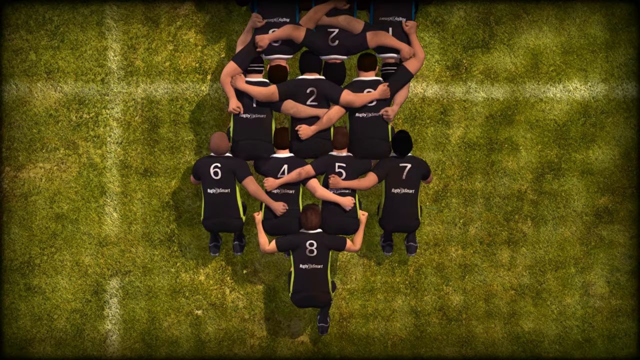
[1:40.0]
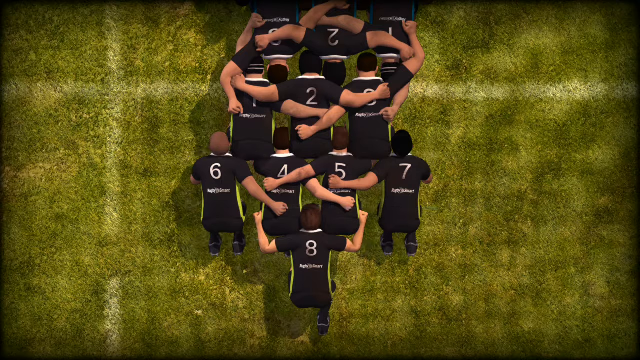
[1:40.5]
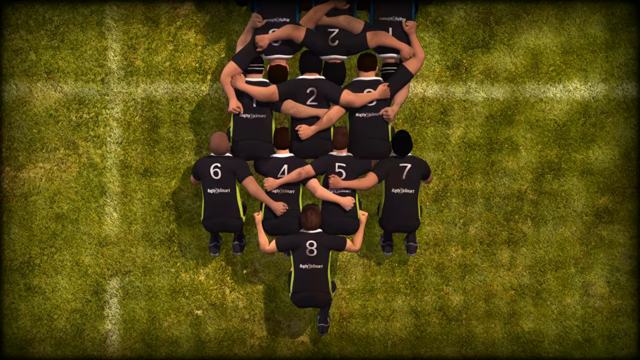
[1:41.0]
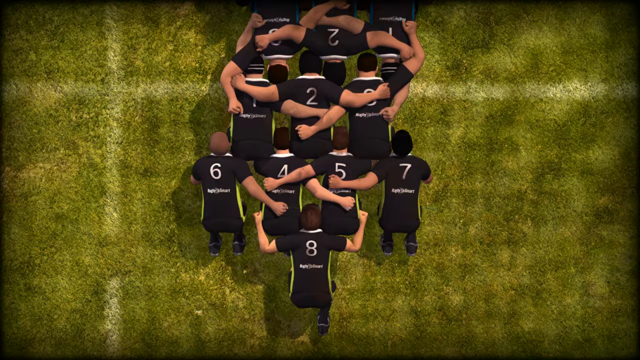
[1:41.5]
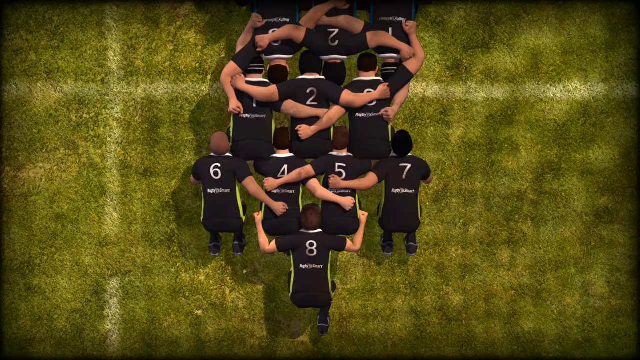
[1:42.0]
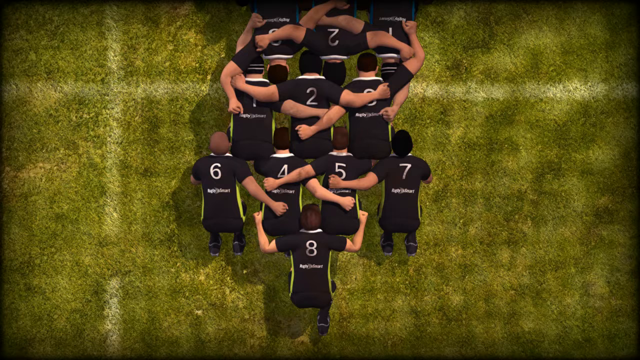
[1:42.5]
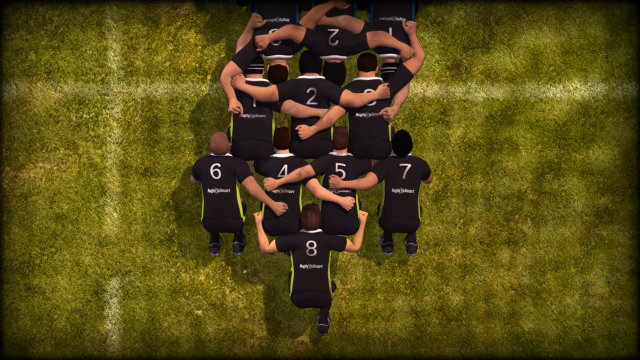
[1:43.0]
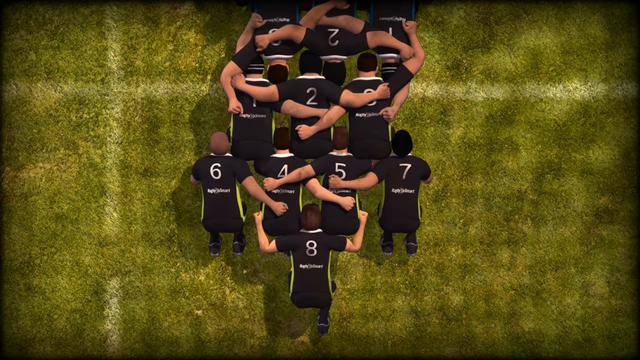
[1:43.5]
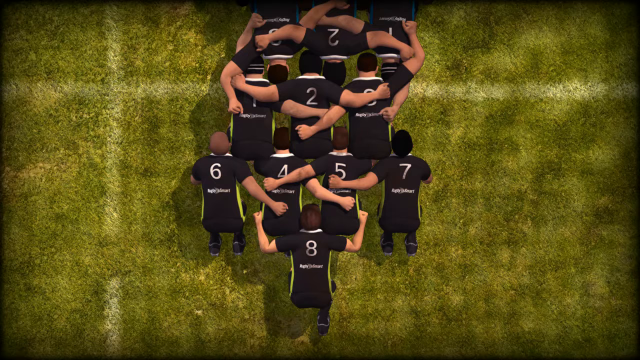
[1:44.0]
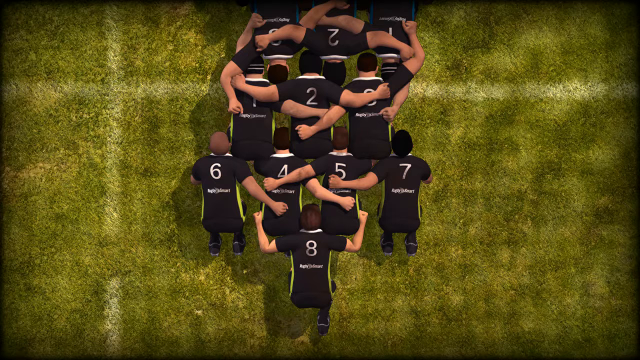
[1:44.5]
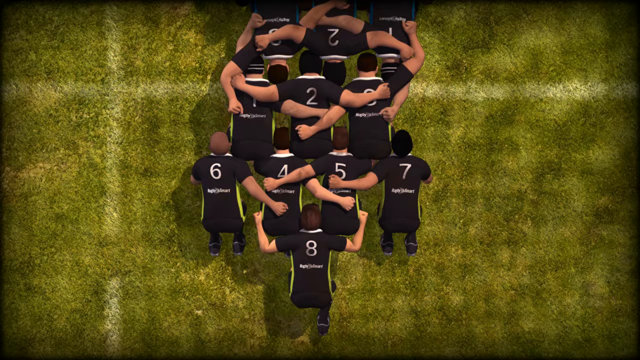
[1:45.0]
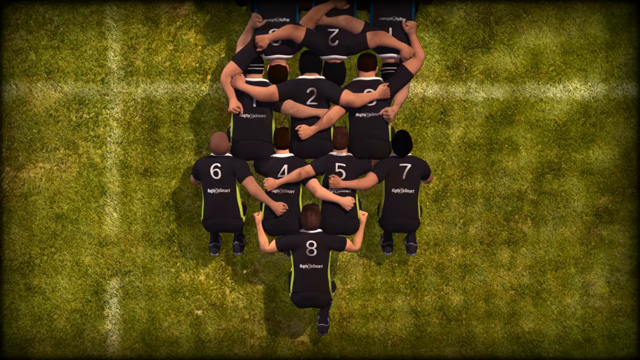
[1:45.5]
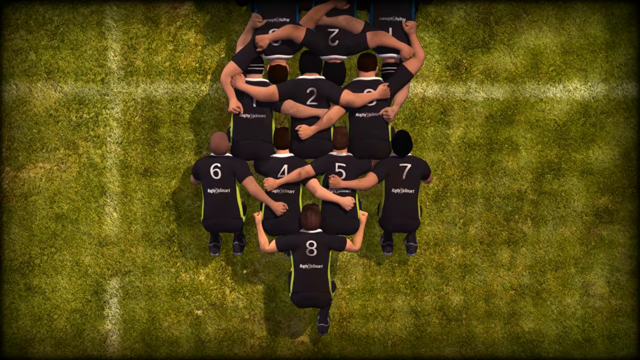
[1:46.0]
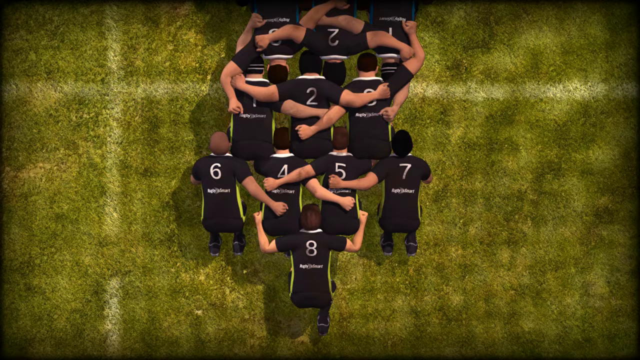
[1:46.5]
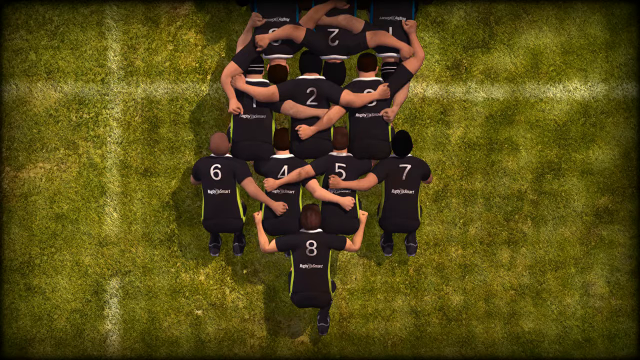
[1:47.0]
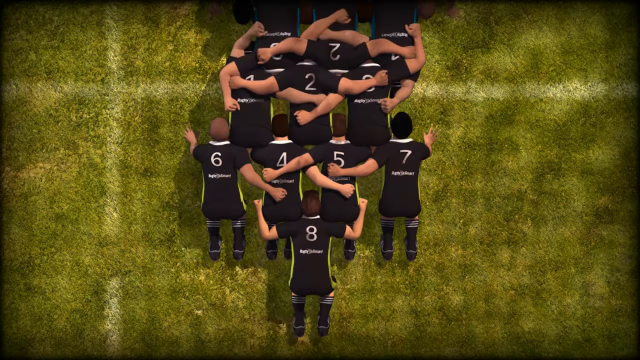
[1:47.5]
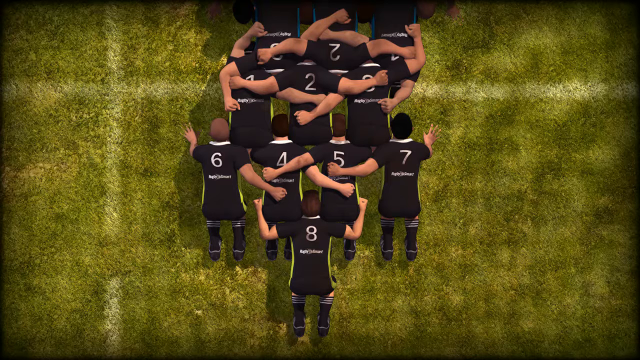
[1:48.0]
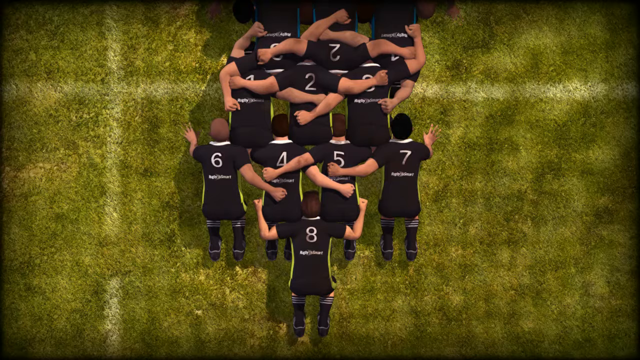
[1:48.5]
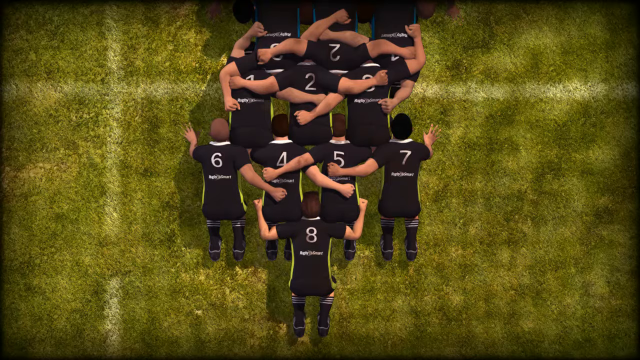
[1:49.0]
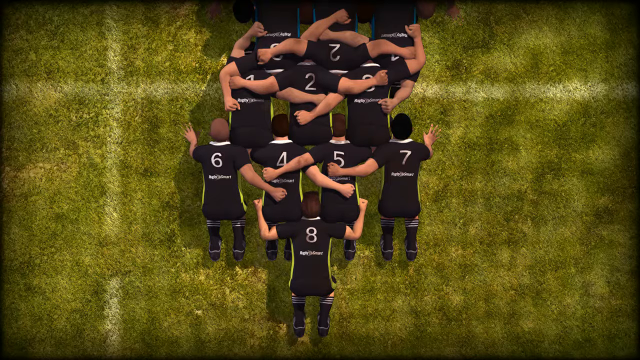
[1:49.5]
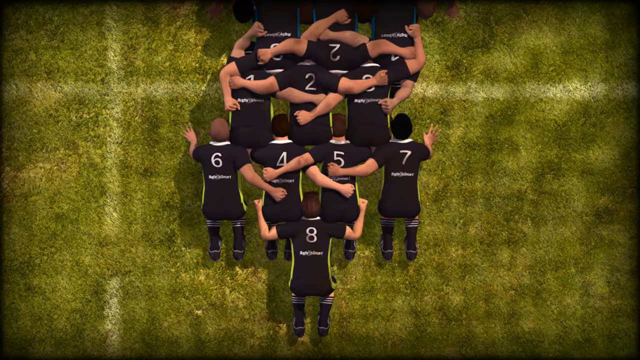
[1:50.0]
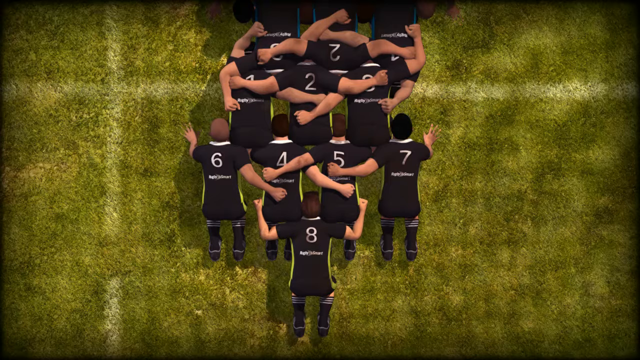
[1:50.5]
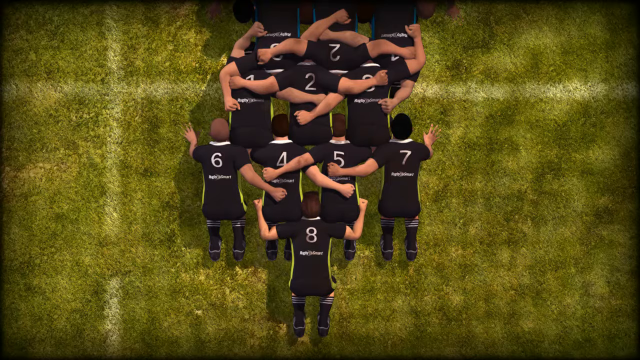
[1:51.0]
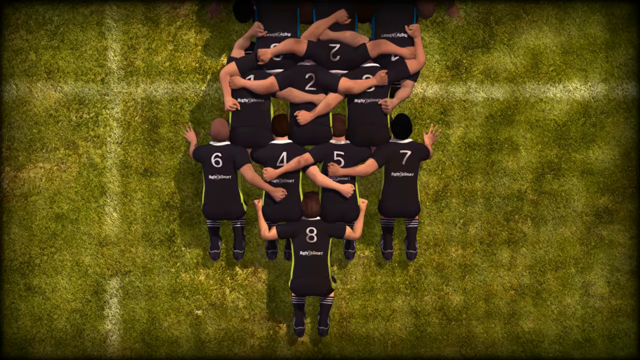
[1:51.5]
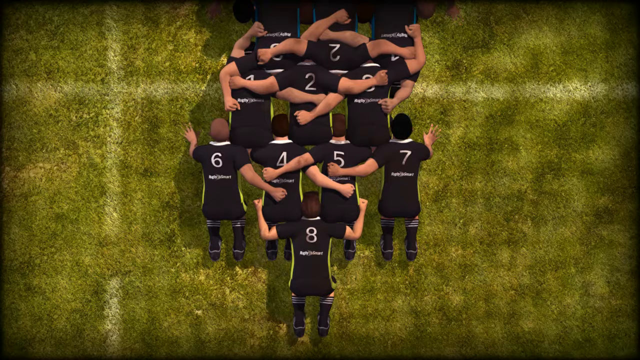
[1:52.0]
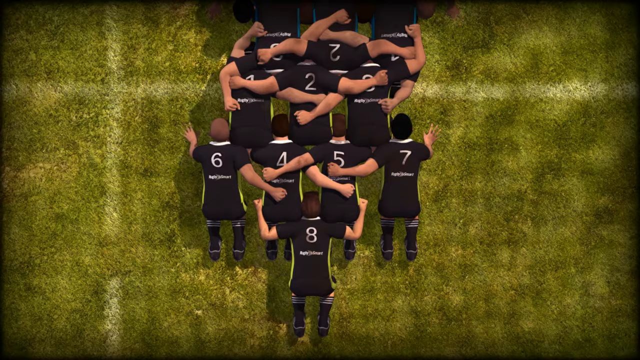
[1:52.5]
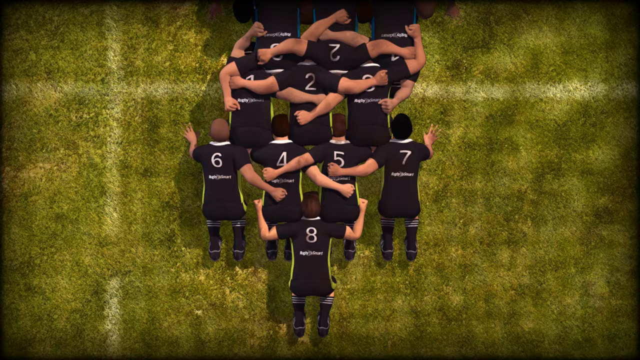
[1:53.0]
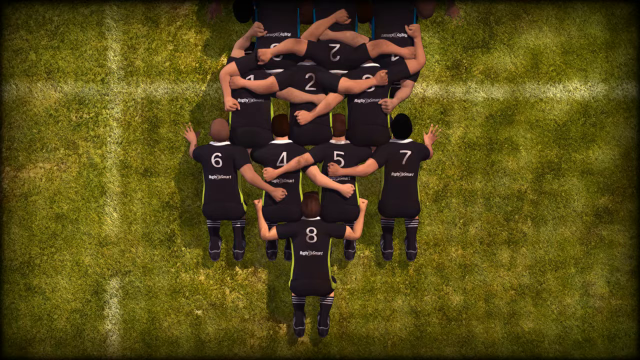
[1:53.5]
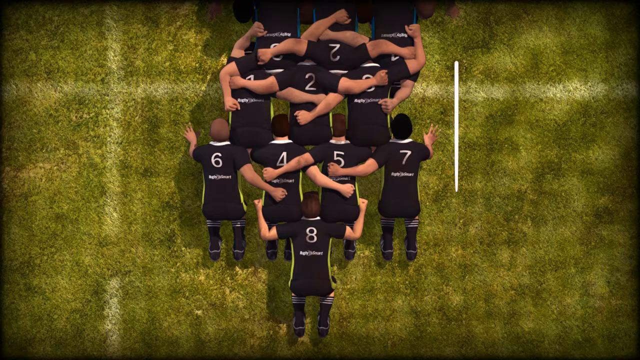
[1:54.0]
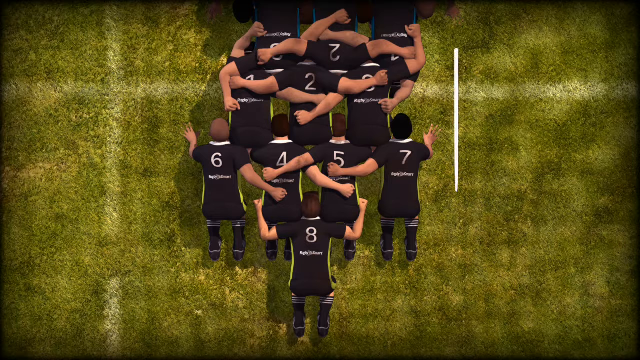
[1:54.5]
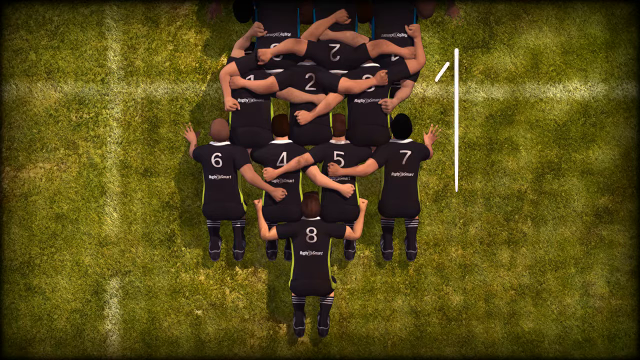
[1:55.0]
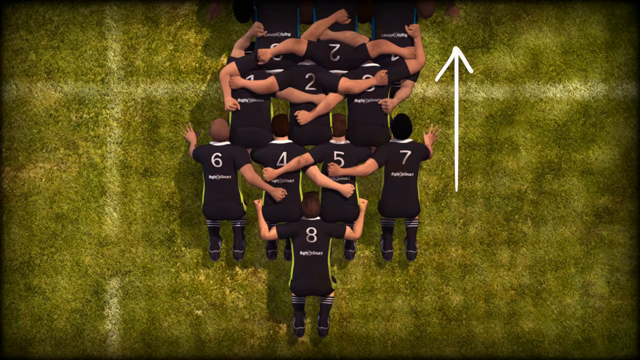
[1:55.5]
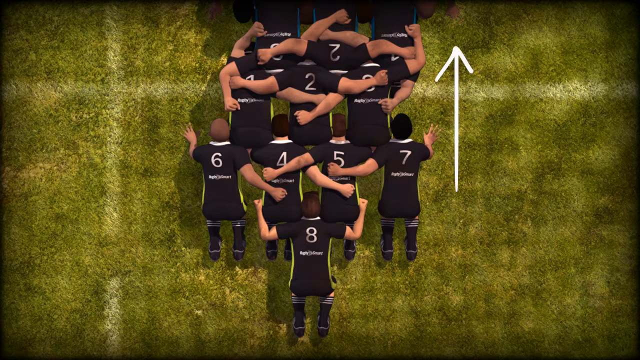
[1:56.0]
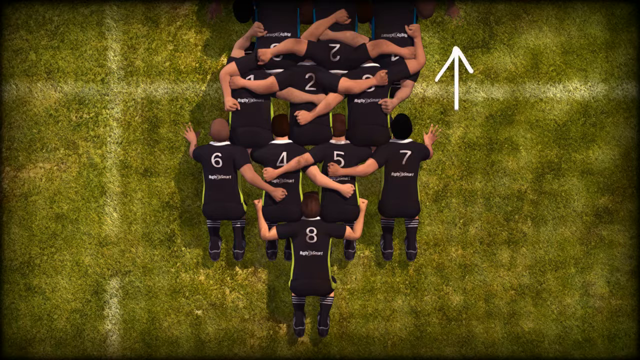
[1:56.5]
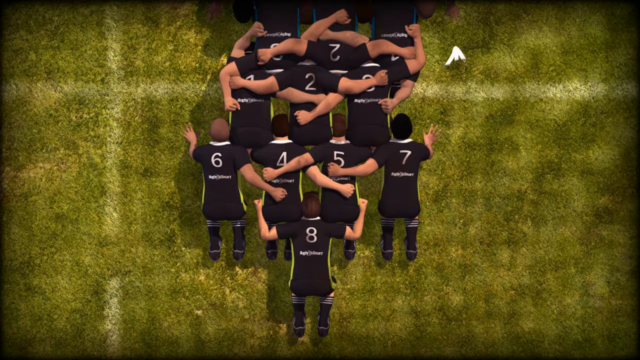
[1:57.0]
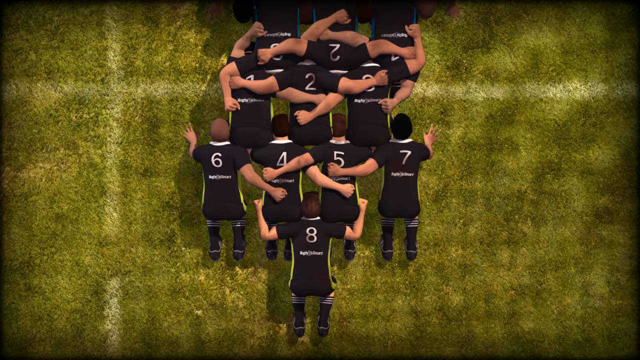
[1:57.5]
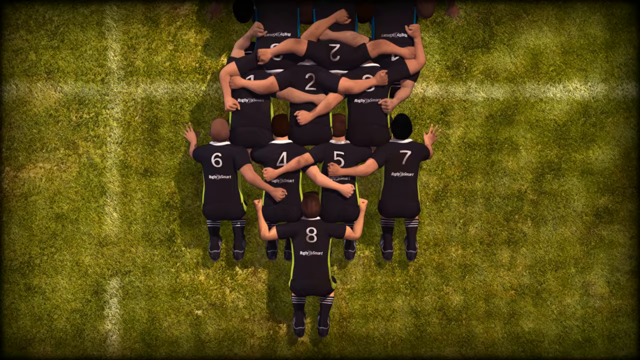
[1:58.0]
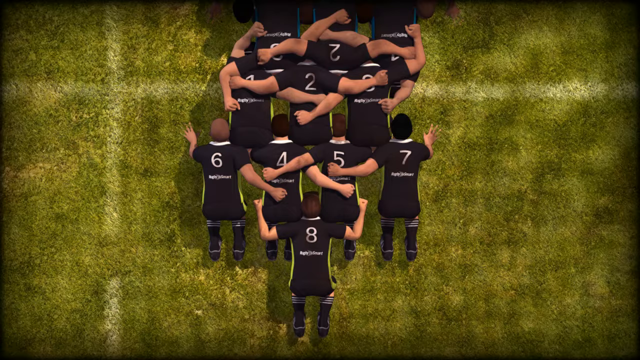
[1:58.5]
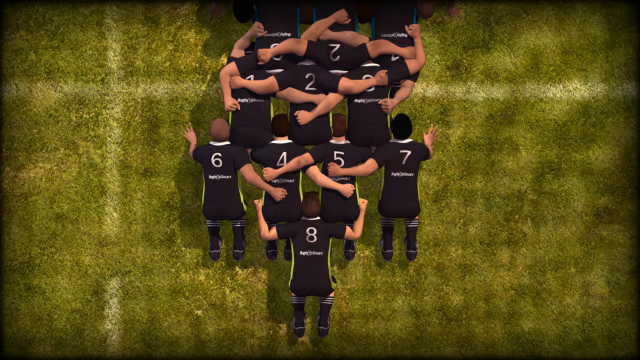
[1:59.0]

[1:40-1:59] The bird's eye view of the 3D animated rugby union scrum continues. Three players in the front row are interlocked with their arms around each other's waists, the second row consists of four players with their arms around one another's waists, and the third row consists of a single player with its arms around the waists of two second-row players. All of the first team's scrum players are visible, along with three players of the opposition team. All the players in the scrum move slightly, seemingly indicating that they have interlocked correctly and are ready to start the scrum. A vertical line then appears along the side of the players, seemingly indicating the direction in which the scrum should take place. There is then some movement again between the scrum players.